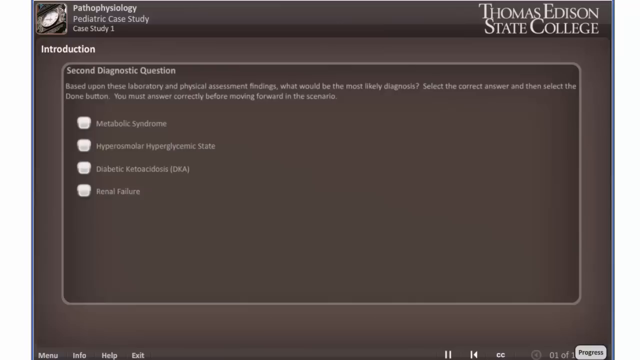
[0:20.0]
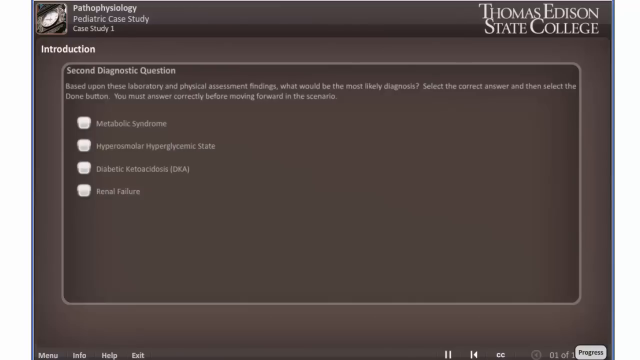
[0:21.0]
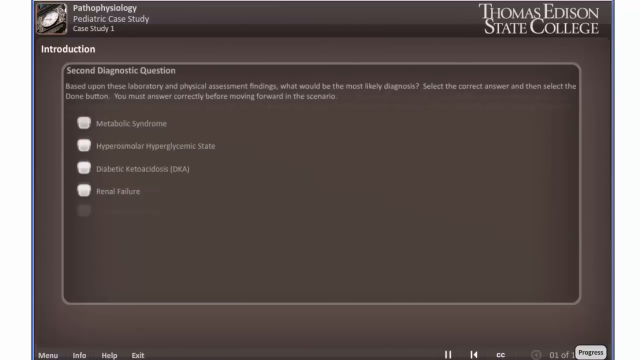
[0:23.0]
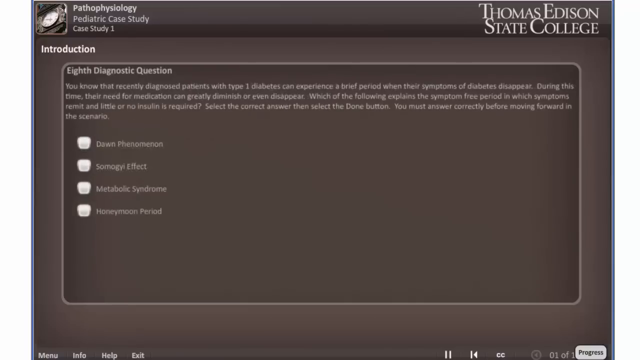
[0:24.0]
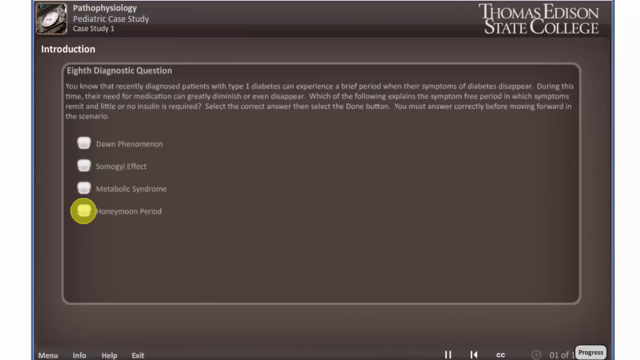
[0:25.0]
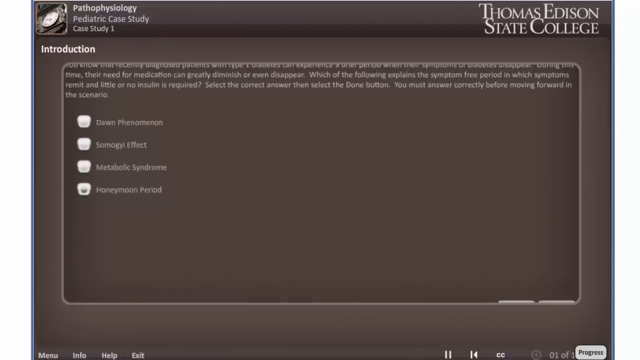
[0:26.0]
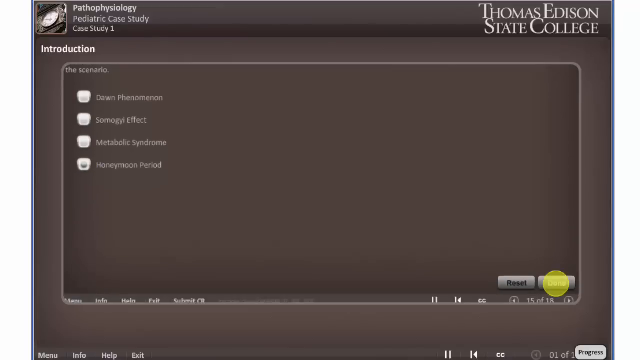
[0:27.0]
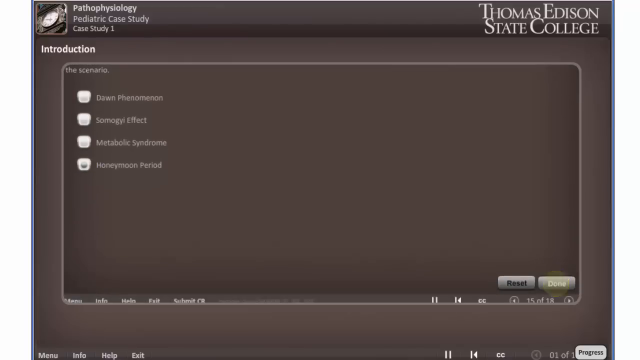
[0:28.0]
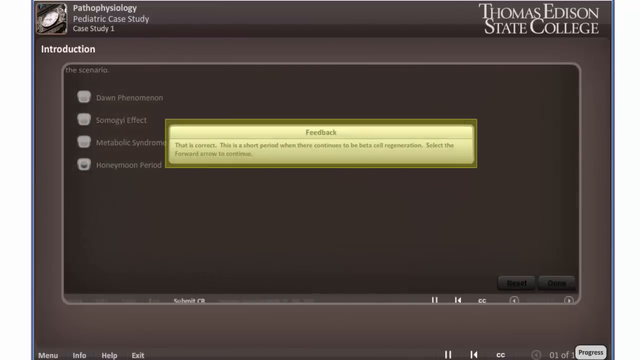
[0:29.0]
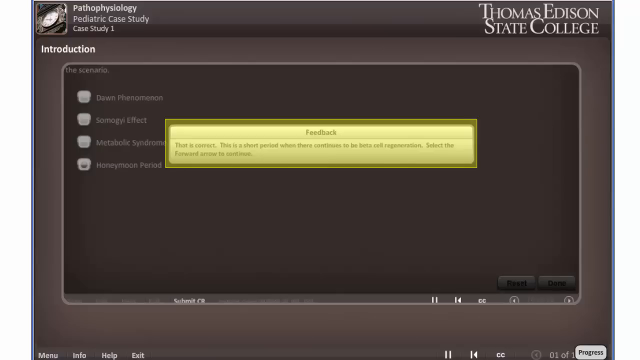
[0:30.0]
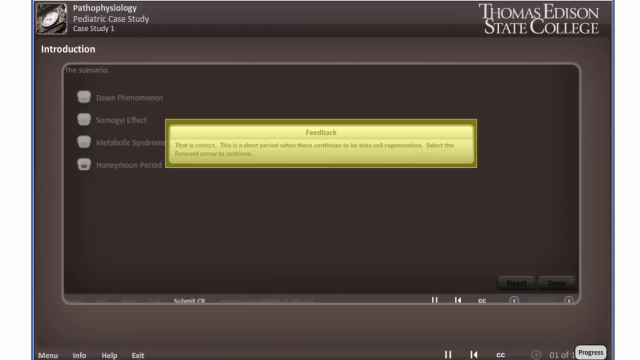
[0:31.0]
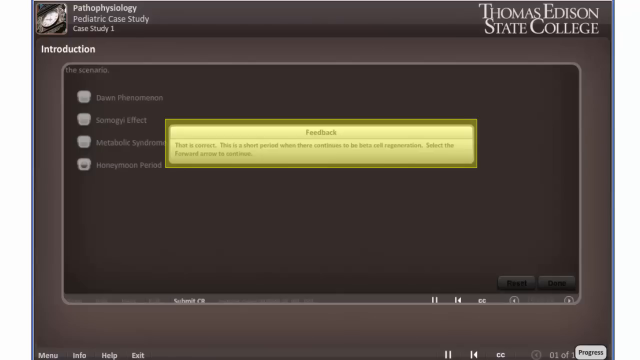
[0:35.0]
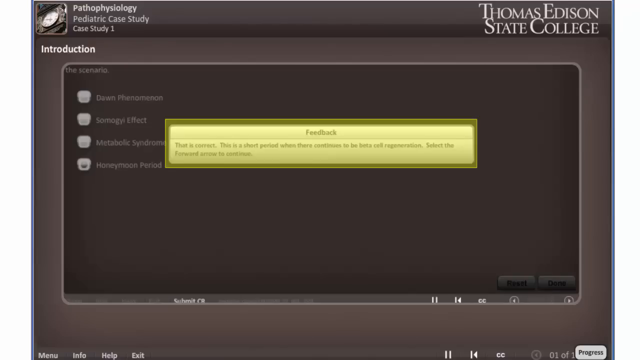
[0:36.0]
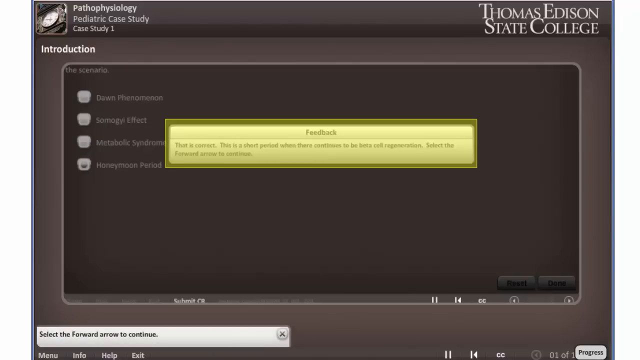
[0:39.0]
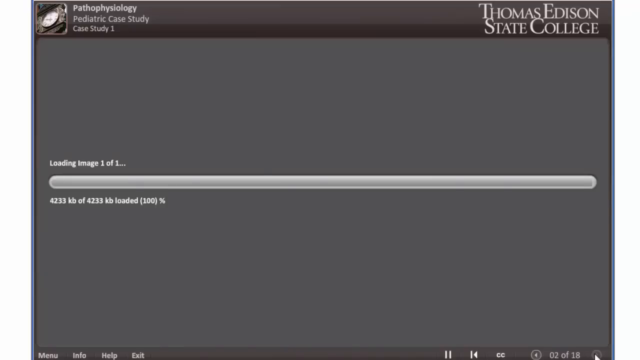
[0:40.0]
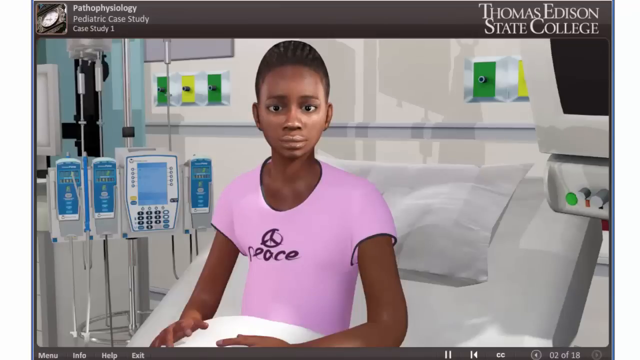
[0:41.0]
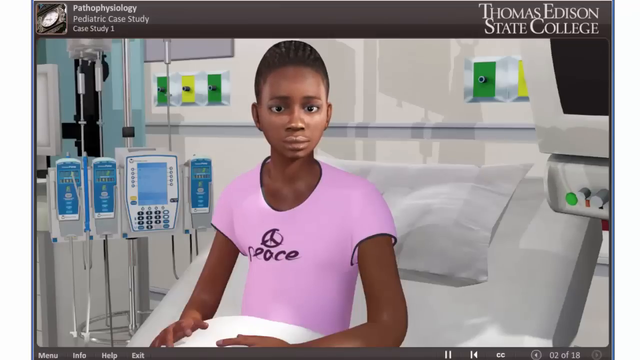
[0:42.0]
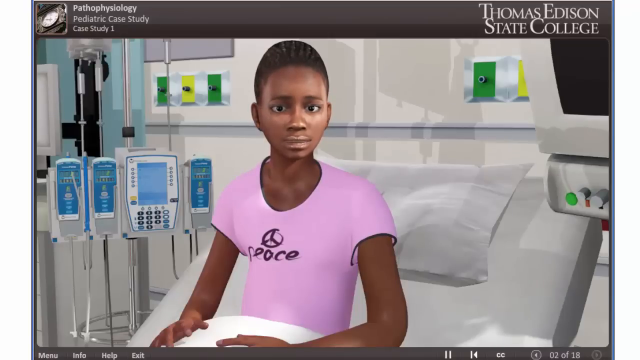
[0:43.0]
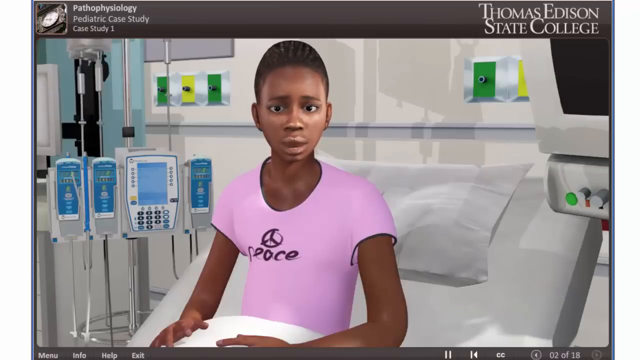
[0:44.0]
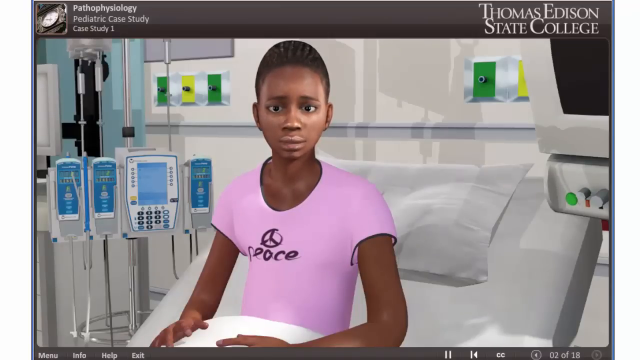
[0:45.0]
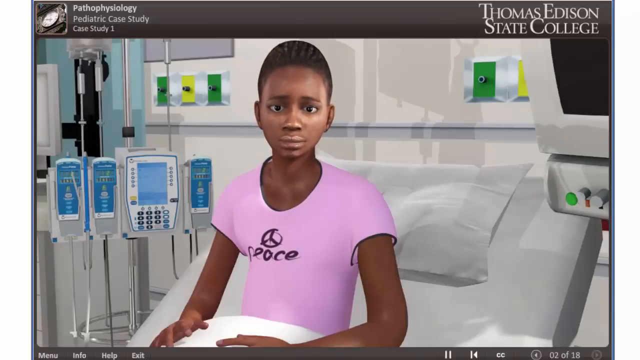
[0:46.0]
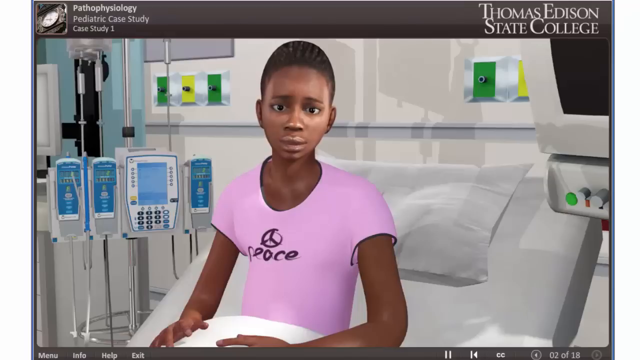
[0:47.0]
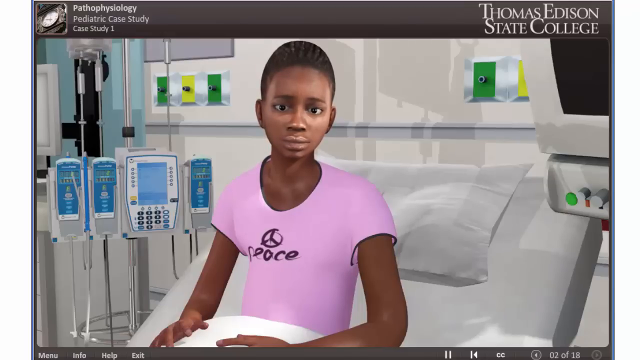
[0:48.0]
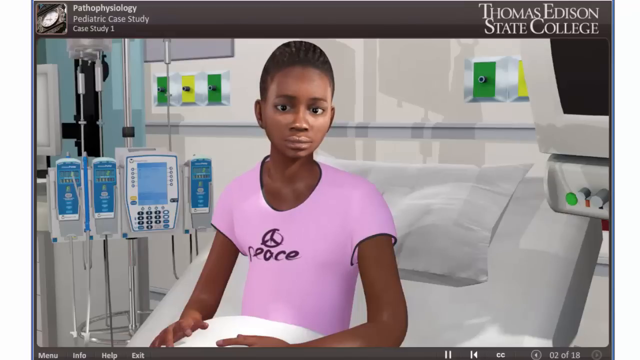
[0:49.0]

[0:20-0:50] The page shows "Thomas State" and, on the right side, "Edison College", together forming Thomas Edison State College. "Pathophysiology" appears on the left side, along with "Pediatric Case Study" and, underneath, "Case Study 1" and "Introduction". A diagnostic question reads: "based upon these laboratory and physical assessment findings, what would be the most likely diagnosis? Select the correct answer, and then select the Done button. You must answer correctly before moving forward in the scenario." The answer options include "Metabiotic Syndrome", a partly visible word beginning with "hyper", "hypoglycemic state", and "diabetic" followed by a word starting with K; another option possibly ends in "failure", starting with F. The words are small and hard to read even when zoomed in. The diagnosis question is then answered, and a pop-up reading "Feedback" appears; whether the answer is correct or incorrect is unclear. The pediatric patient is then seen sitting up in the hospital bed, talking.